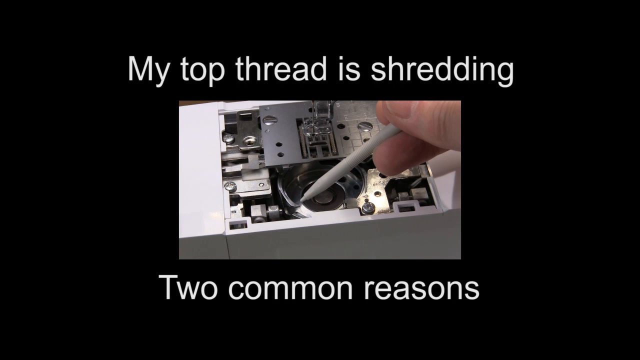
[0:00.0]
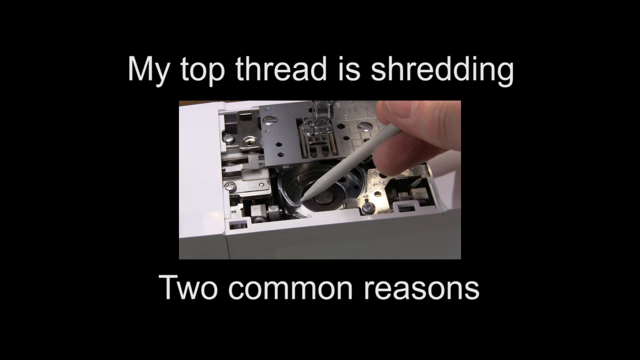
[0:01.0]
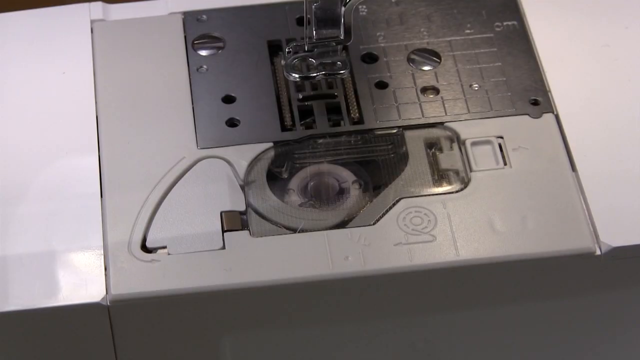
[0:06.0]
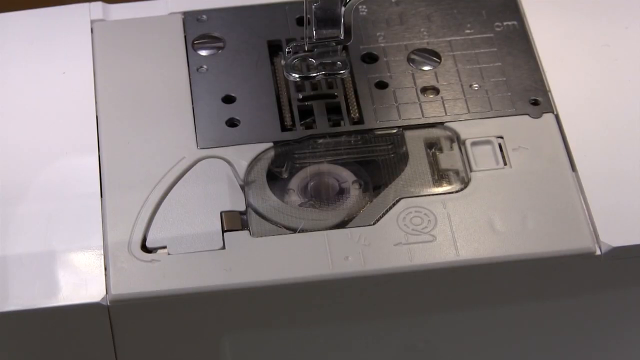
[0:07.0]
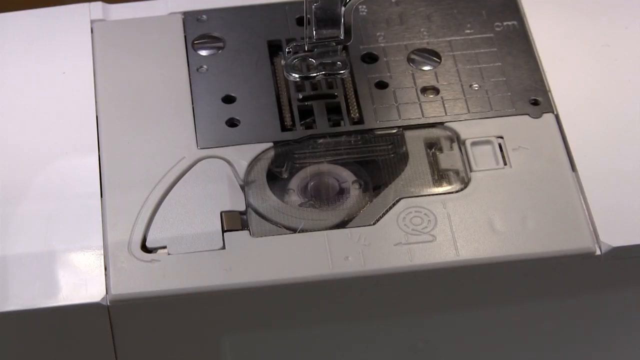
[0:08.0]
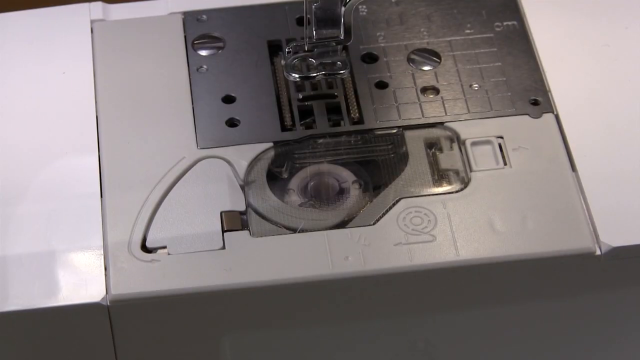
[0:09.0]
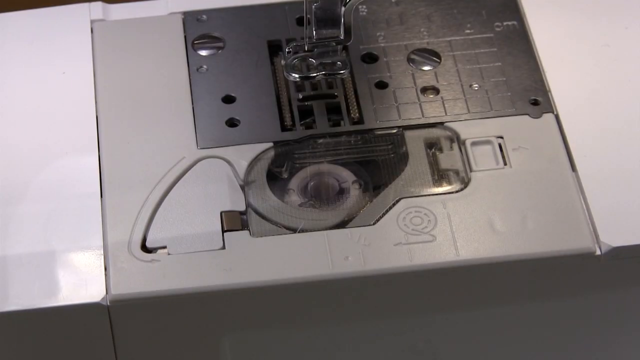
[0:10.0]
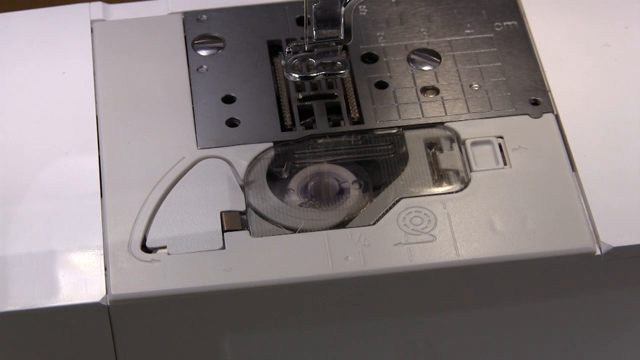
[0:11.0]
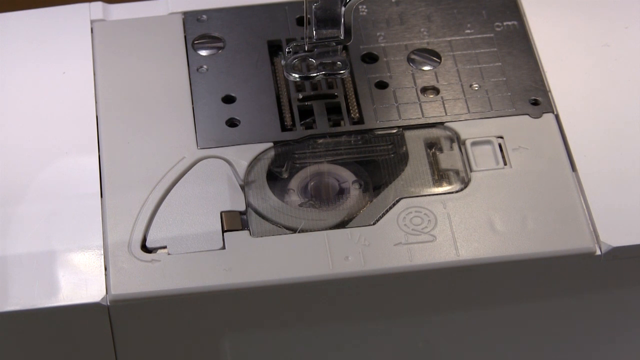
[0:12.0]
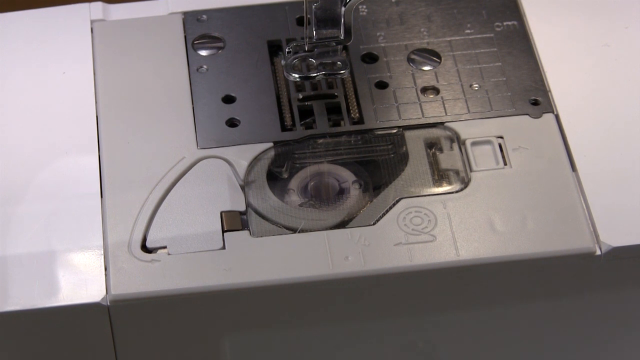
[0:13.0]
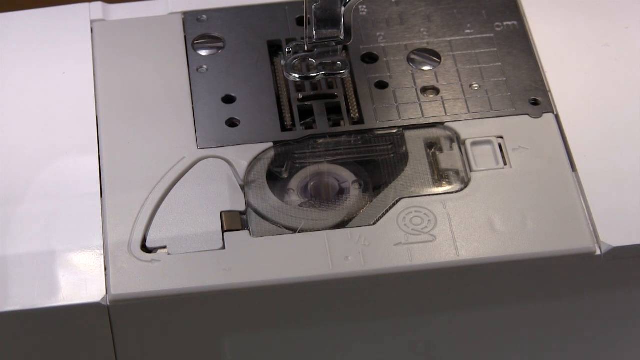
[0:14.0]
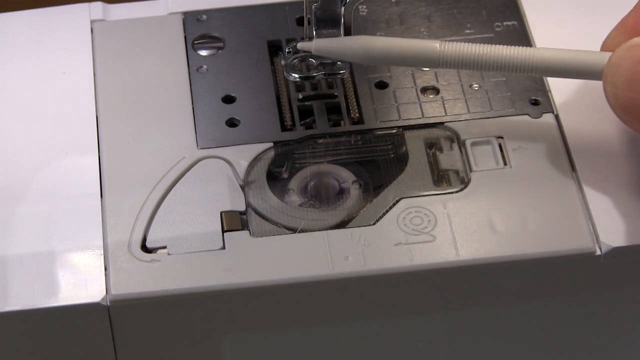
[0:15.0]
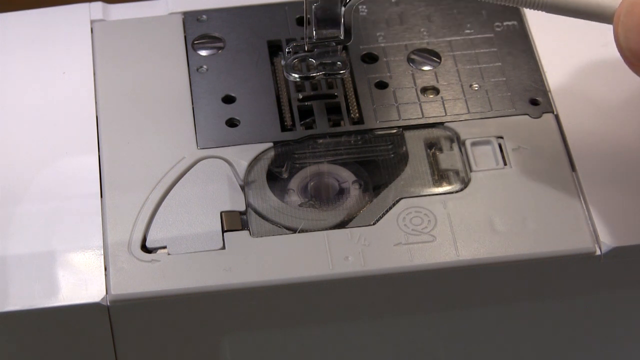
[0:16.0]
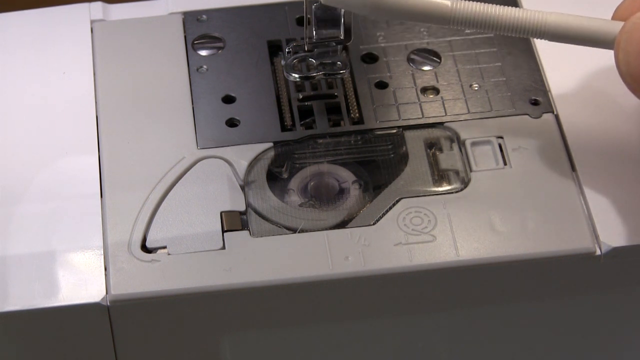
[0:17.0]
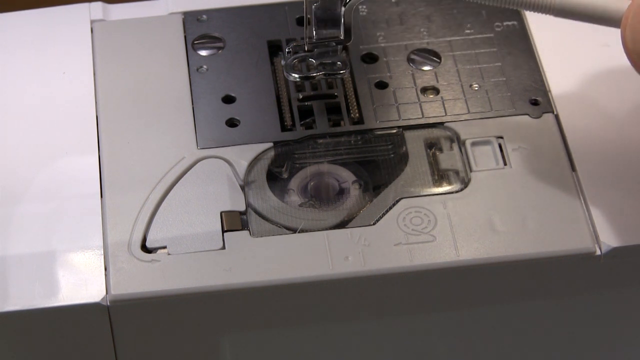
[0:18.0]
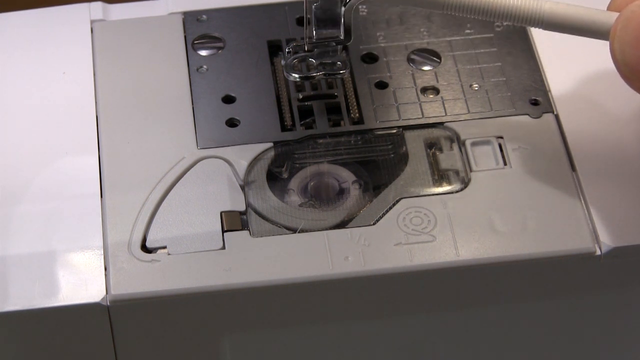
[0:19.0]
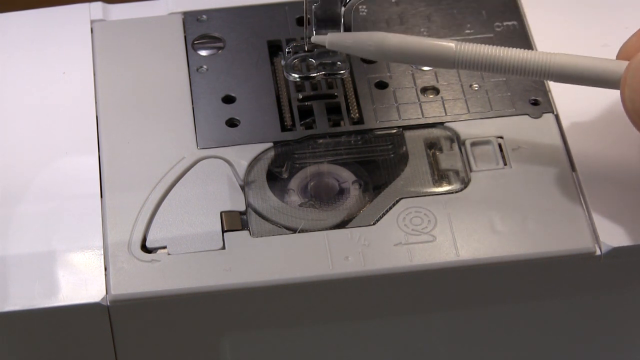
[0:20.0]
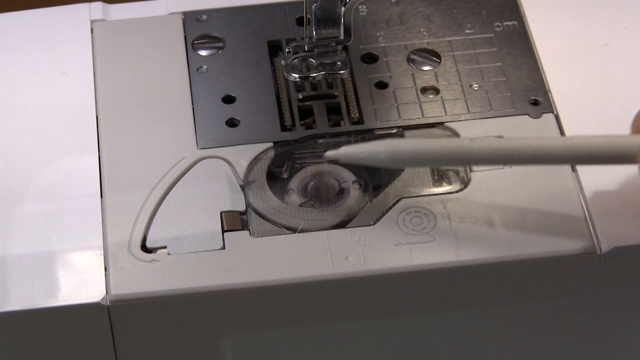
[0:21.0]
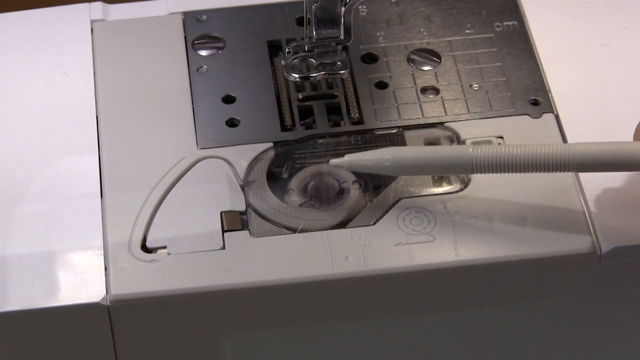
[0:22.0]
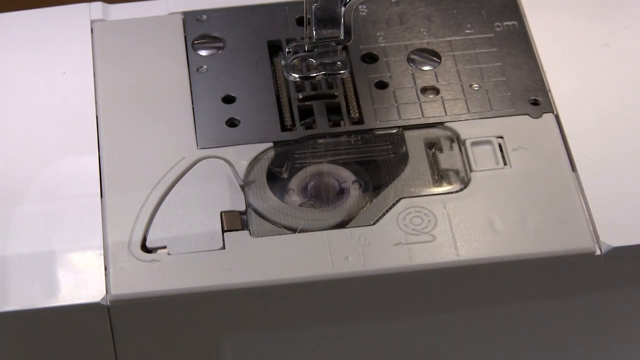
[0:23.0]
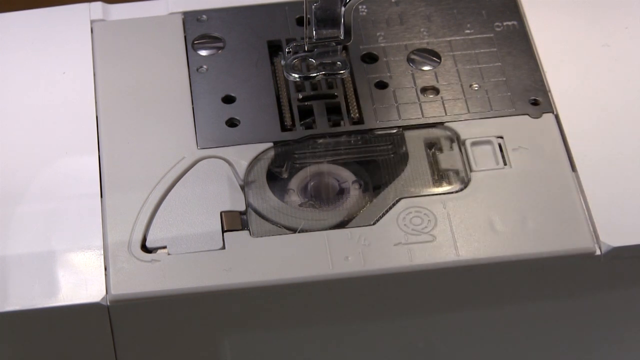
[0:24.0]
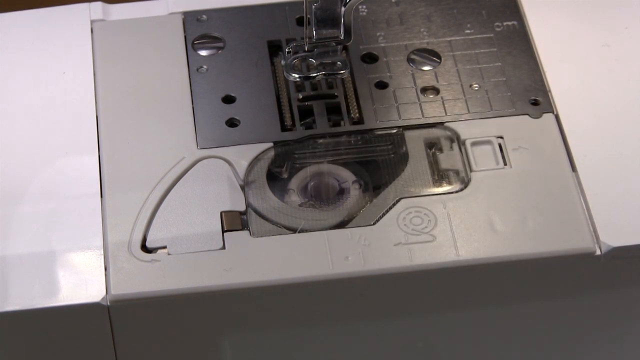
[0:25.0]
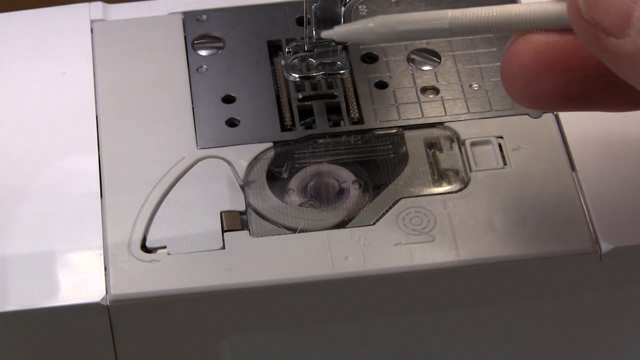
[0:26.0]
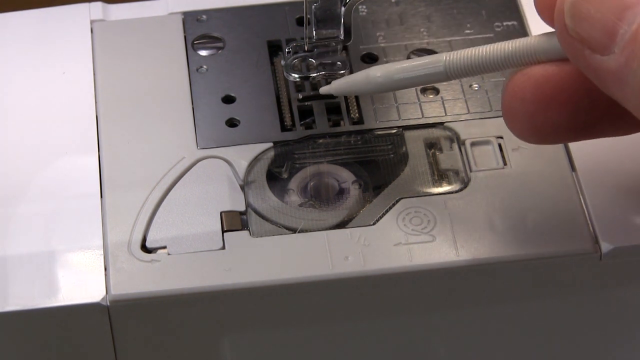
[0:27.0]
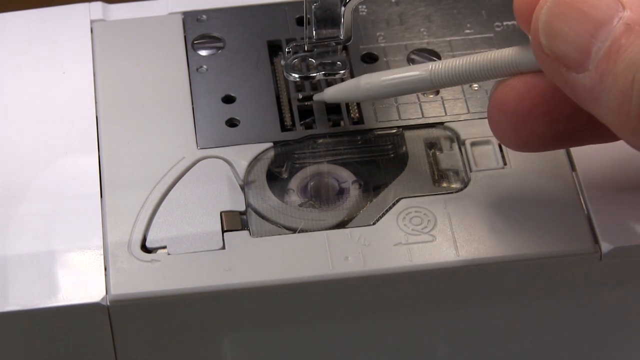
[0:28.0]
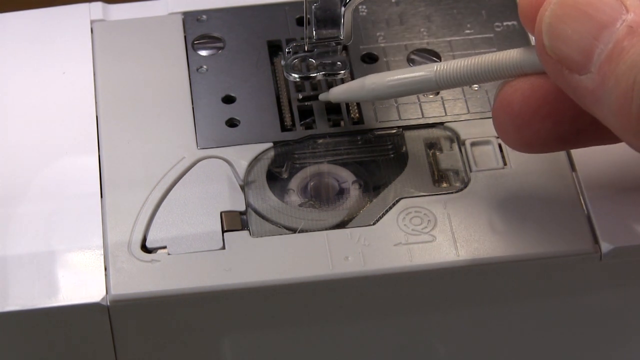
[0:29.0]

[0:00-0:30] The video opens on a black background with white letters that read "My top thread is shredding." Next comes a picture of part of a sewing machine, with the words "two common reasons" below it. The video is a tutorial about why the top thread shreds on a sewing machine. The entire bottom part of the sewing machine is then shown full screen, and a man holds a pencil-like object that he uses to point at different parts of the machine. He first points at the piece at the top, then indicates other parts, moving the pencil-like object in circles.